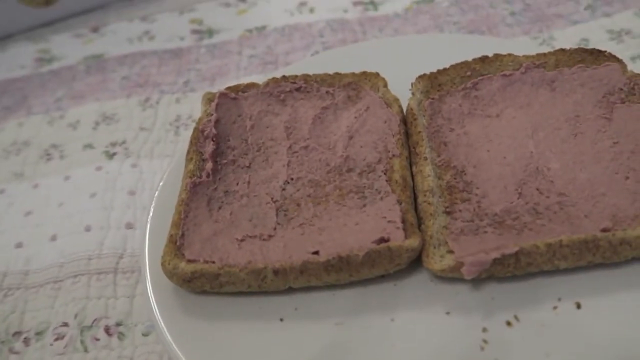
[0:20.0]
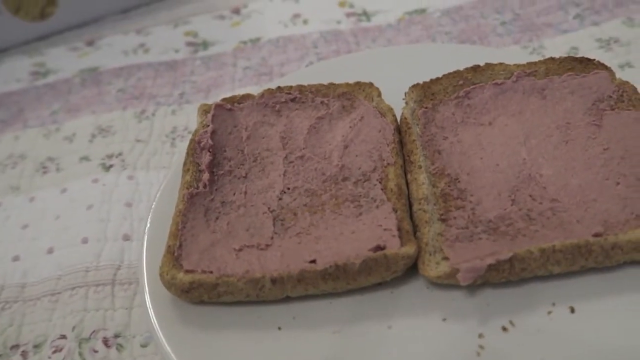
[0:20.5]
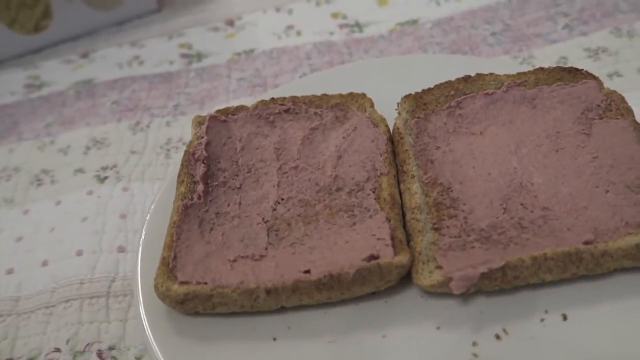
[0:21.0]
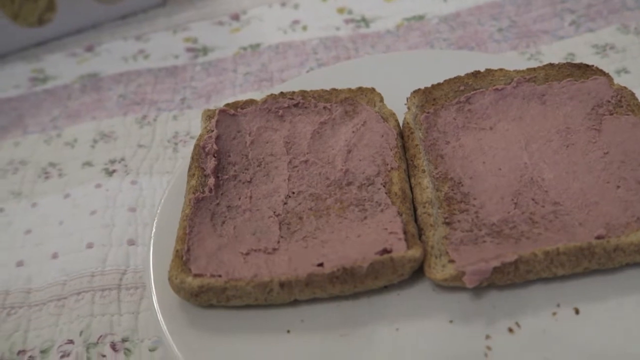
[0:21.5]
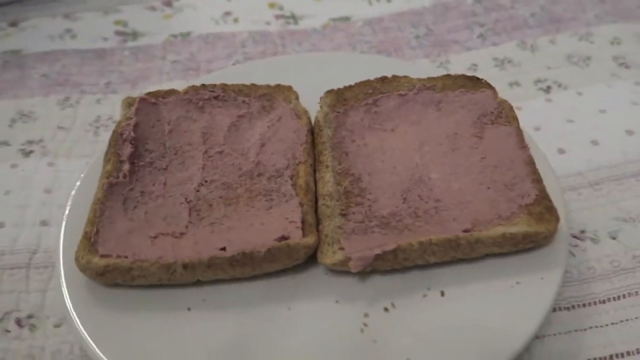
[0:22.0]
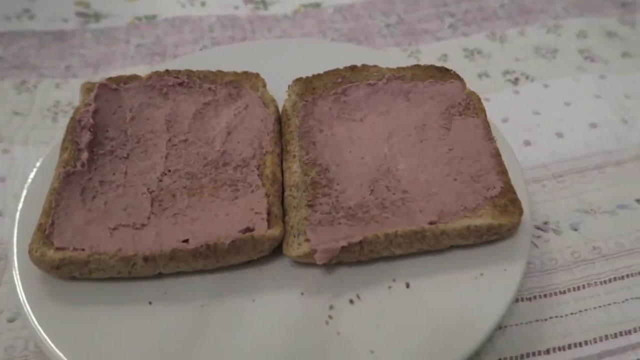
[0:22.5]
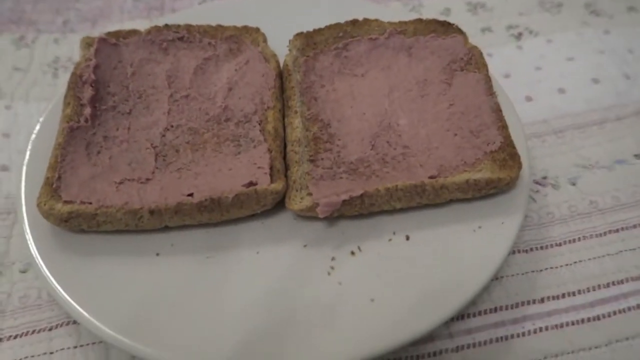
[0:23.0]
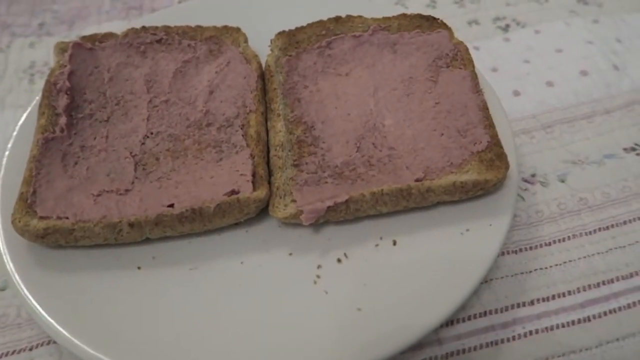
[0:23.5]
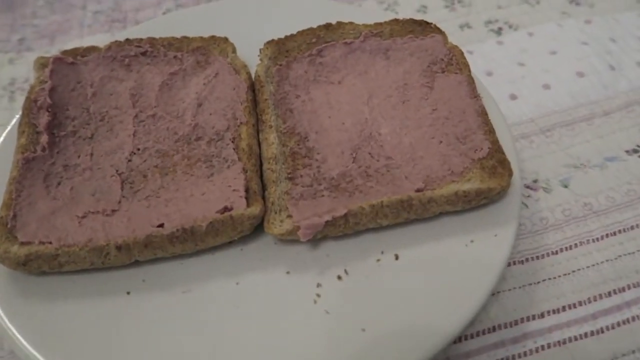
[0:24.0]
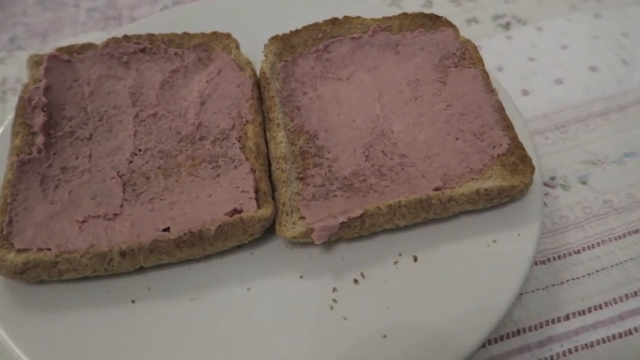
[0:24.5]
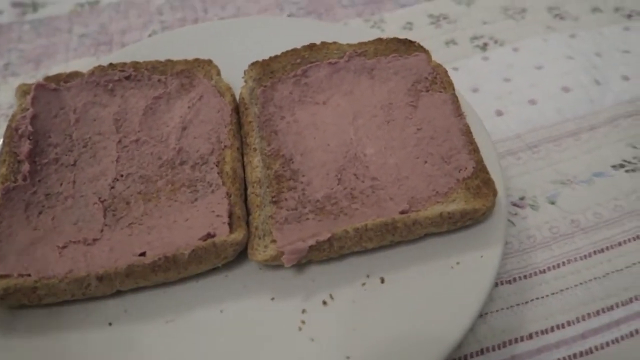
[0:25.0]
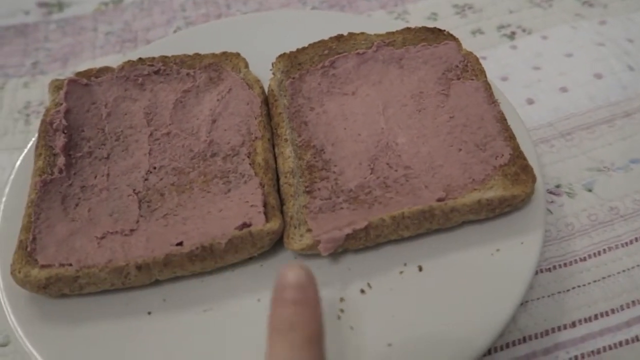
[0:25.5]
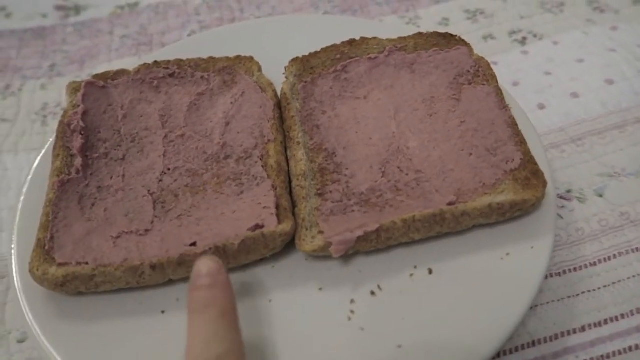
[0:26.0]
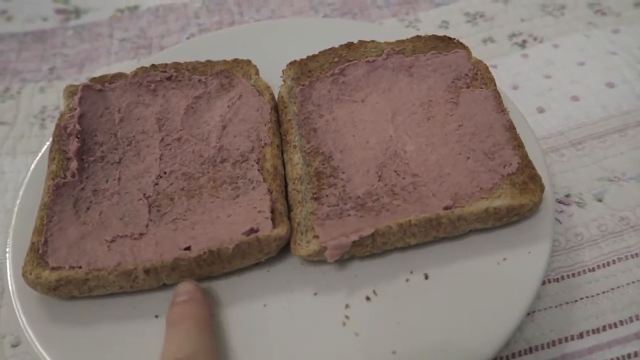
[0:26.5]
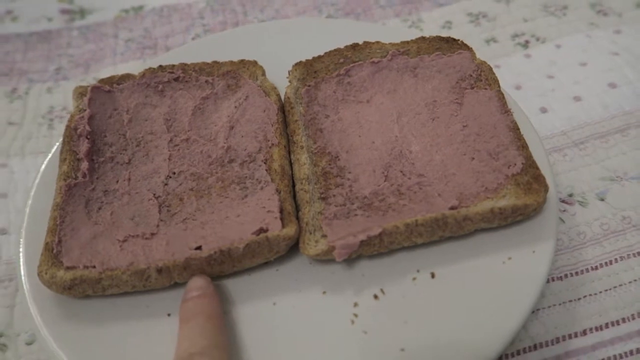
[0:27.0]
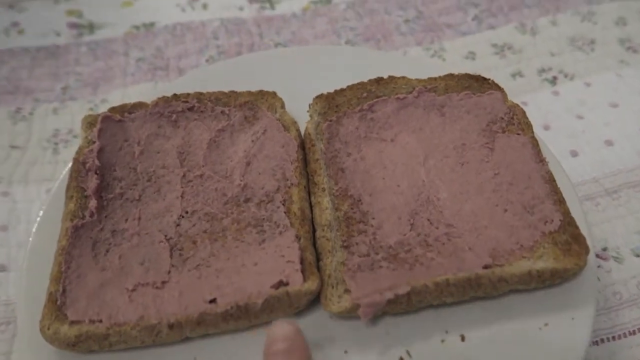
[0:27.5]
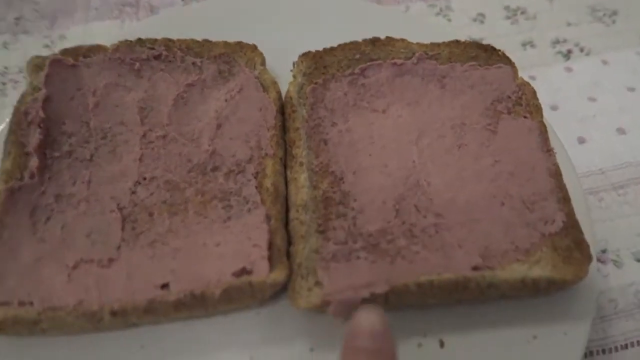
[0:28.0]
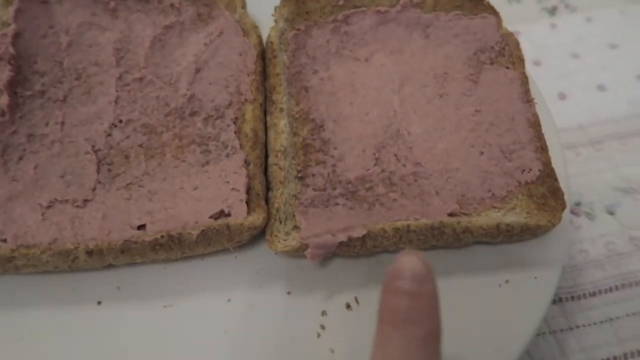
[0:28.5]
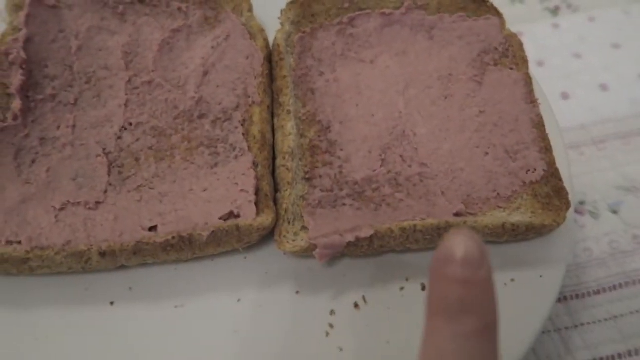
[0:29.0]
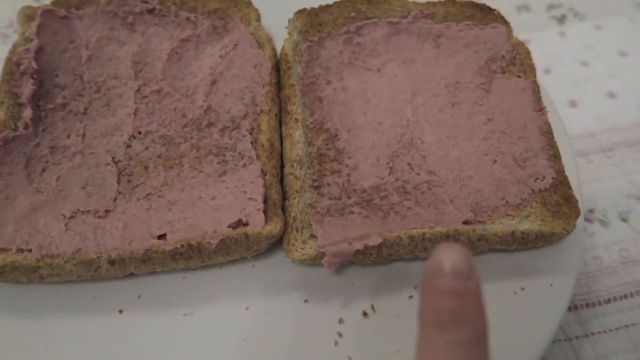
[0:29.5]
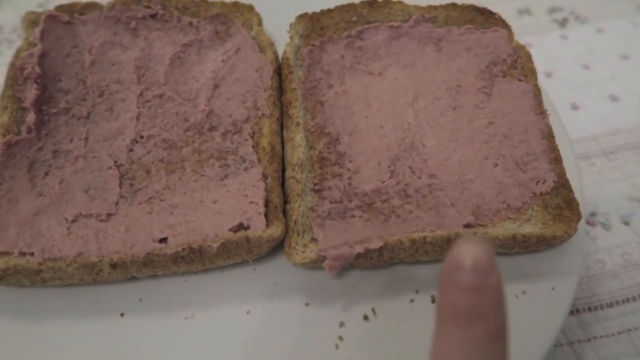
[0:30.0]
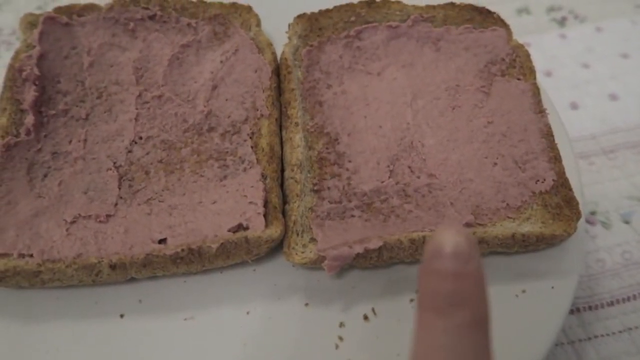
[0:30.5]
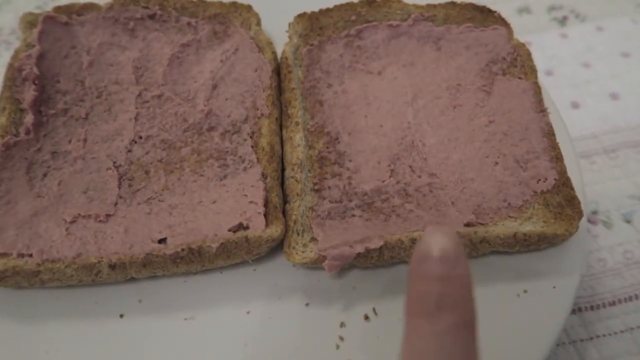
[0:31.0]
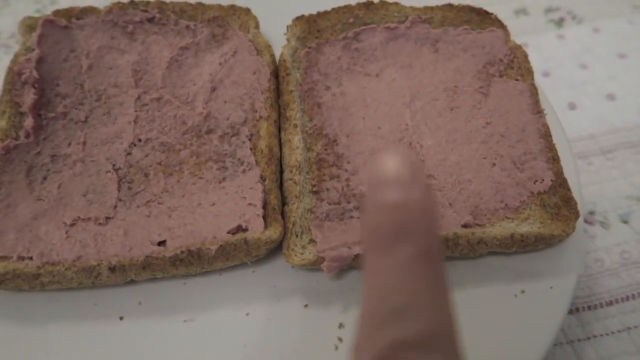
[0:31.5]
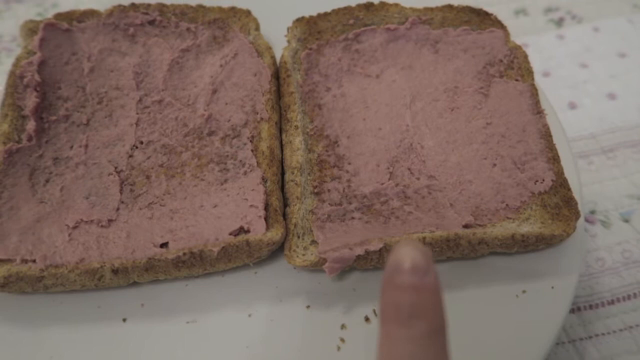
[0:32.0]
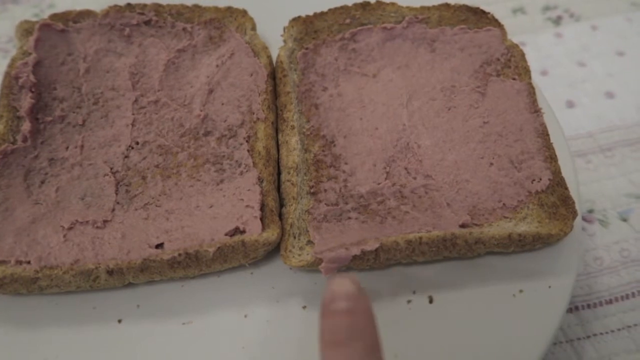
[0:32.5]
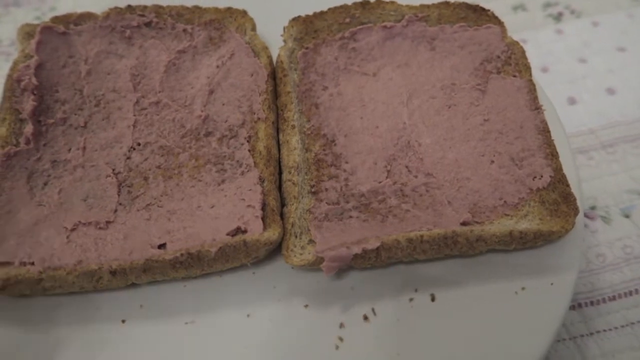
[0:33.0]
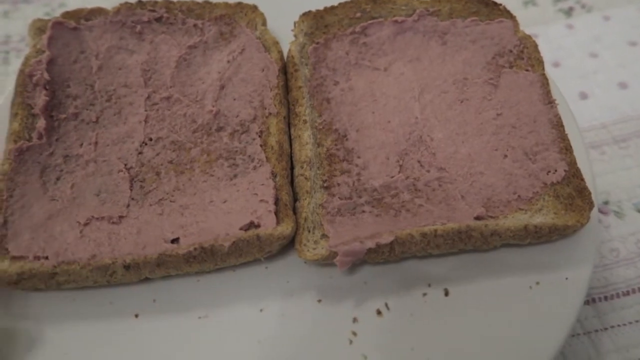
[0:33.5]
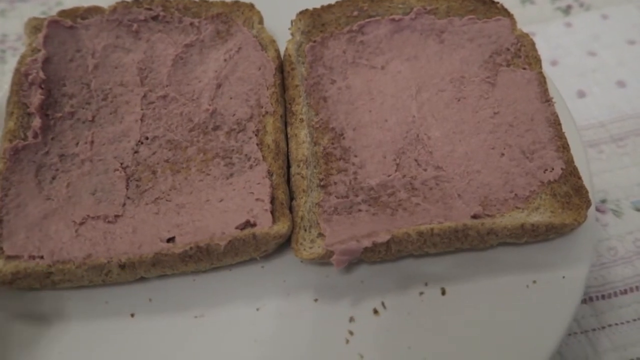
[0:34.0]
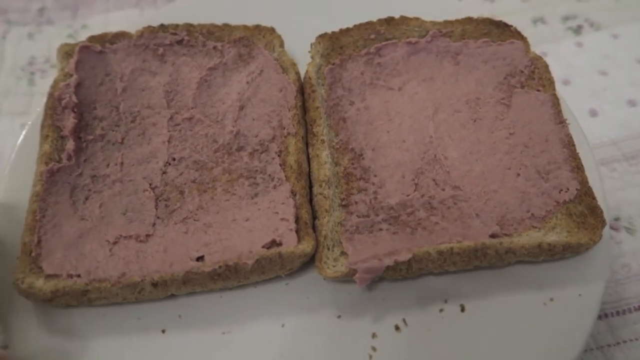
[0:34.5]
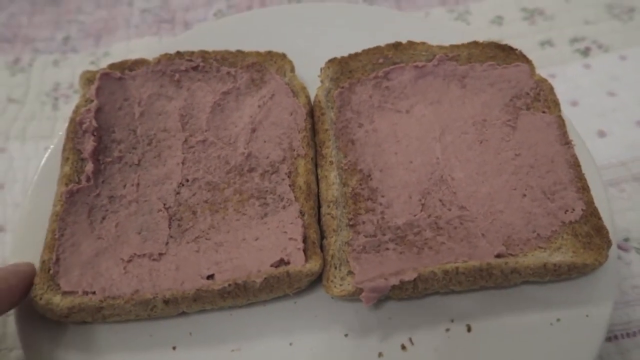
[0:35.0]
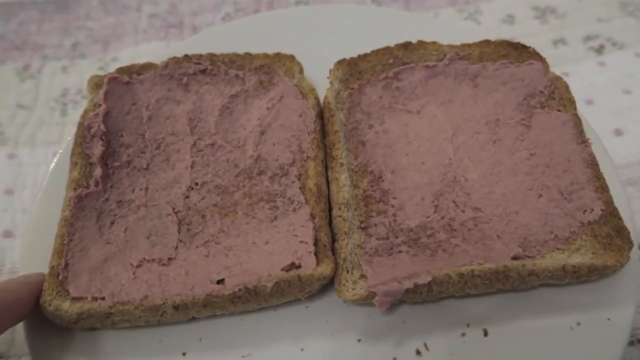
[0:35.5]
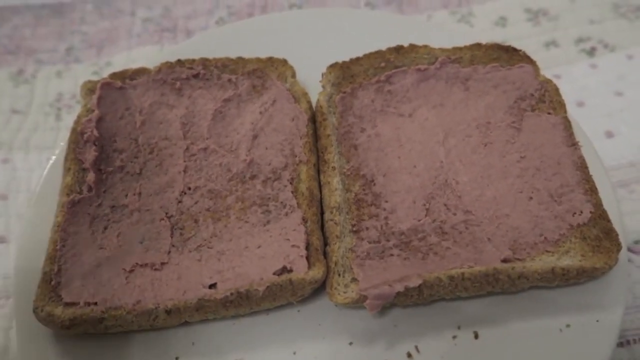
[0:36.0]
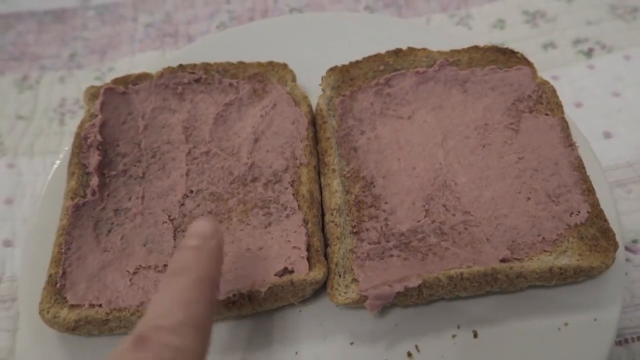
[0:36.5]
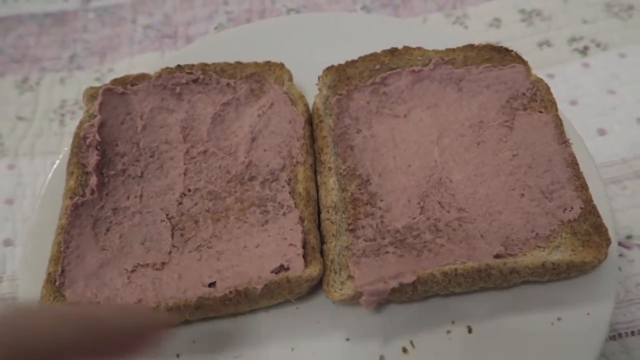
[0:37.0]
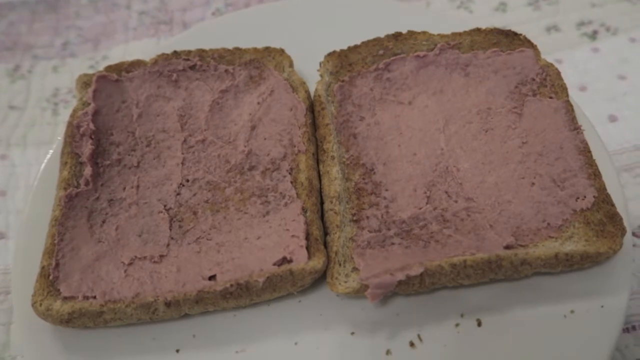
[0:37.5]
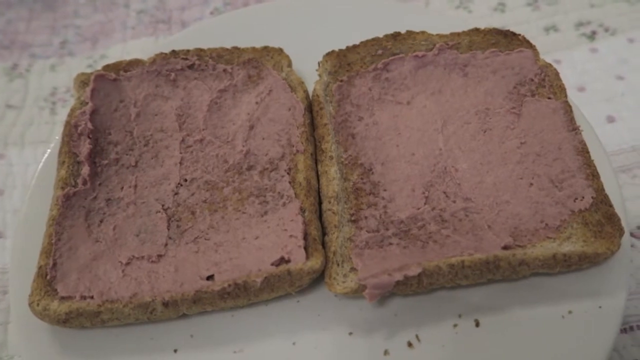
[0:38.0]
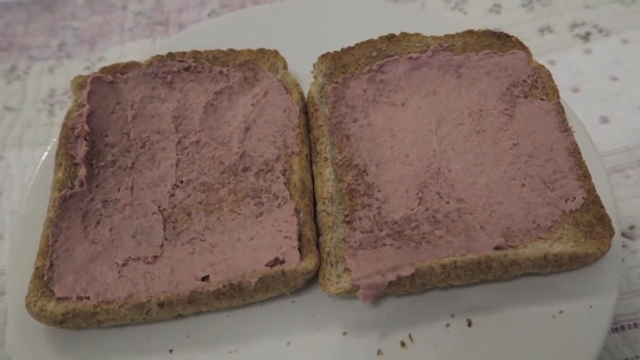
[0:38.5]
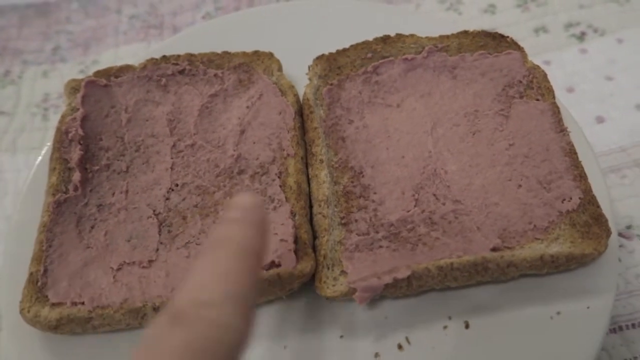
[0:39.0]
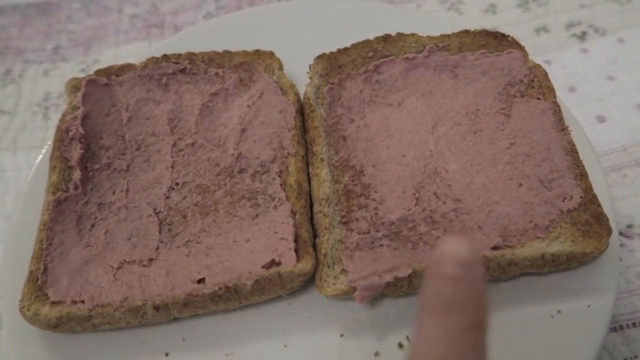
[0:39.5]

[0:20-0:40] Two toasted slices of bread are on a flat white plate, with a brownish spread on top of them, covering every corner of each slice. The bread looks like toasted brown bread, and the two slices lie flat on the plate. A finger points at the bread as the camera moves, apparently as someone explains what the bread is. The table the plate is on has a cloth with flowers on it.